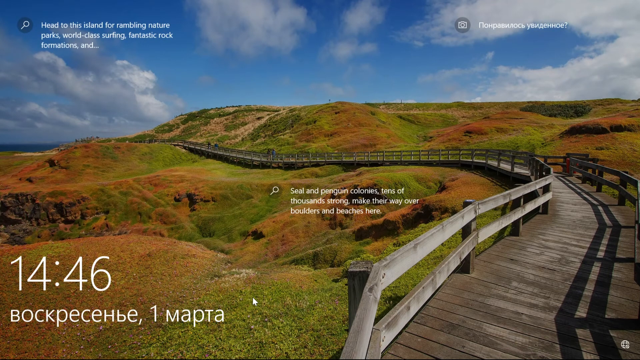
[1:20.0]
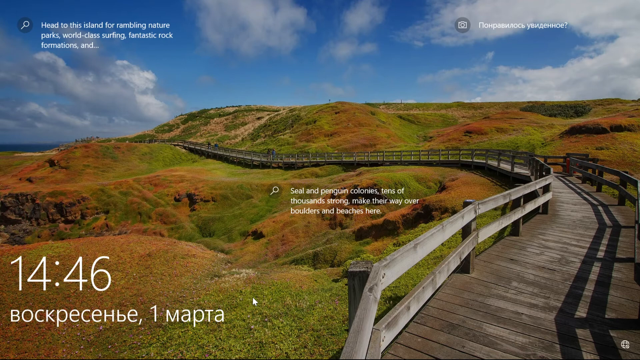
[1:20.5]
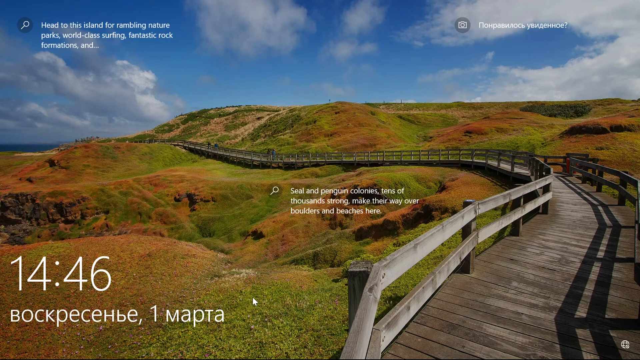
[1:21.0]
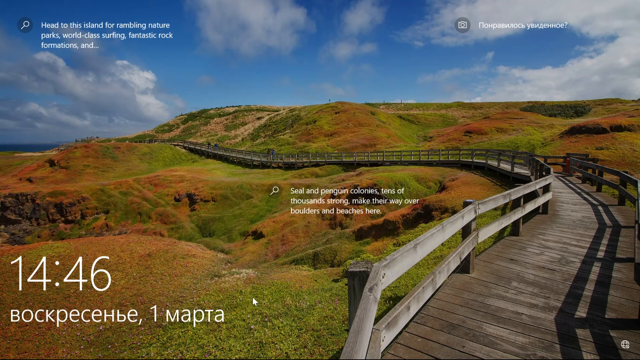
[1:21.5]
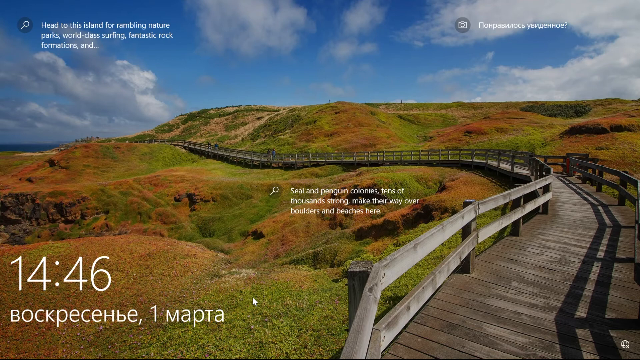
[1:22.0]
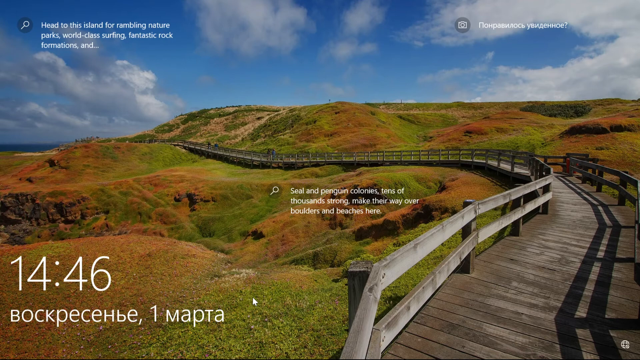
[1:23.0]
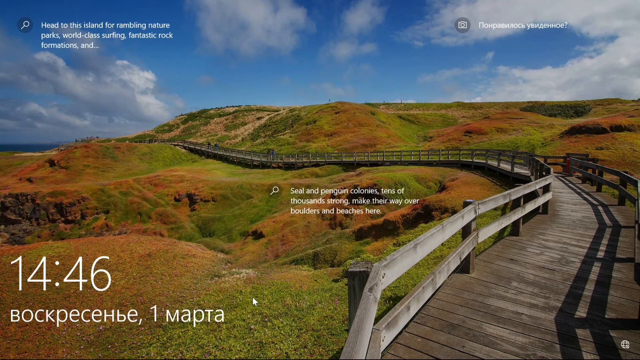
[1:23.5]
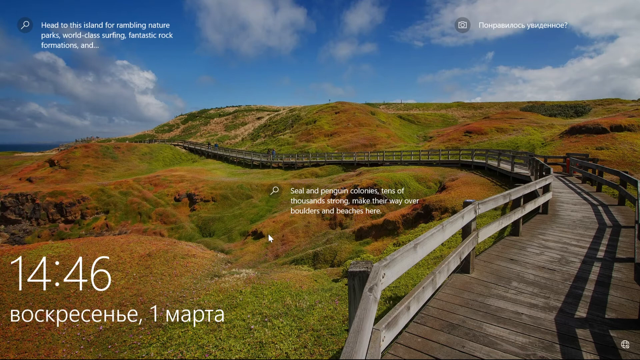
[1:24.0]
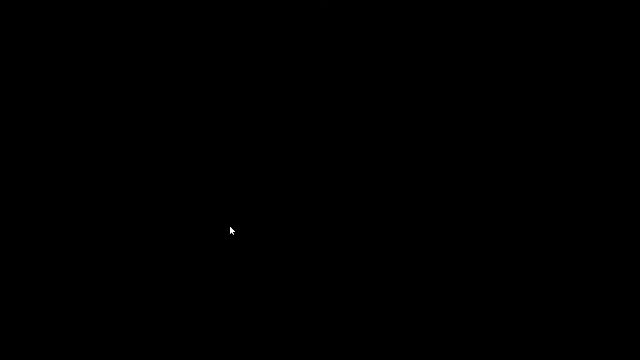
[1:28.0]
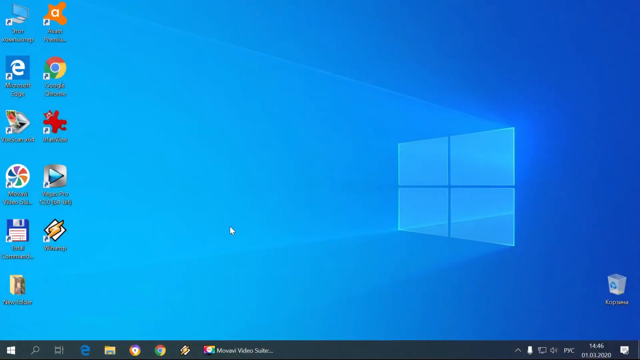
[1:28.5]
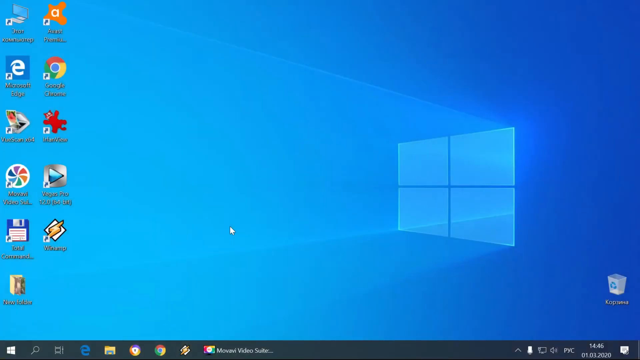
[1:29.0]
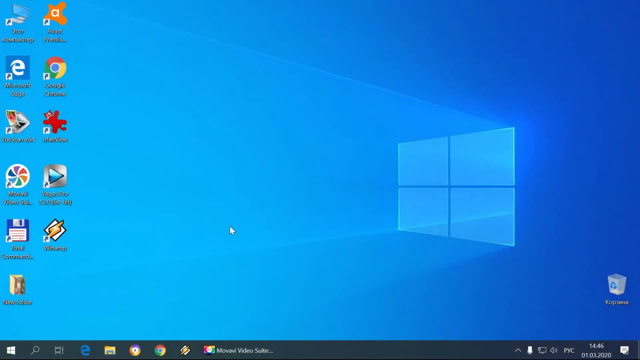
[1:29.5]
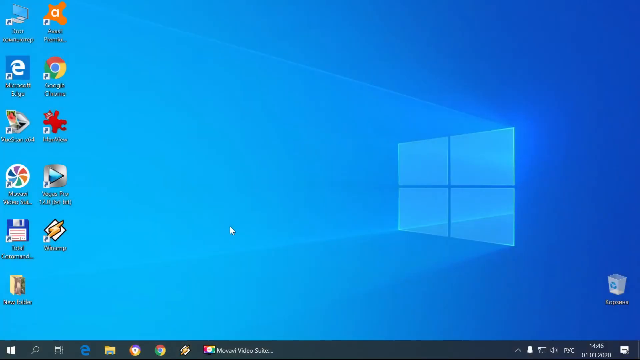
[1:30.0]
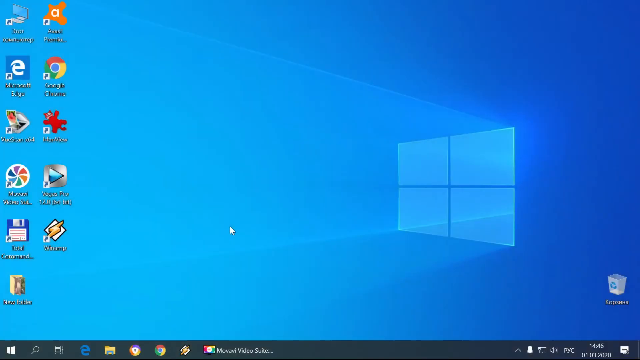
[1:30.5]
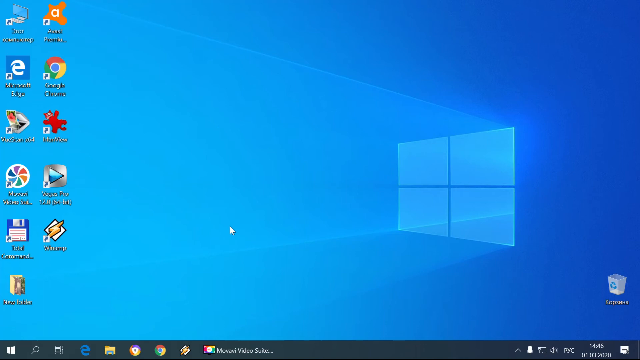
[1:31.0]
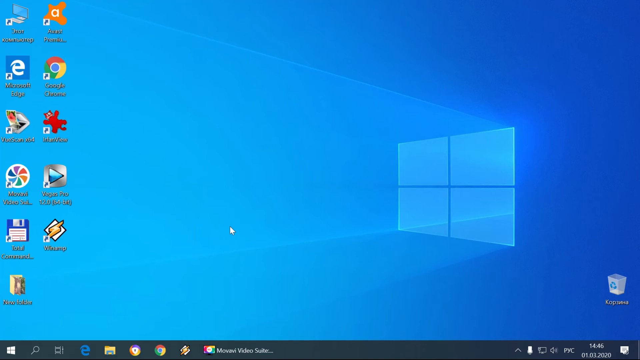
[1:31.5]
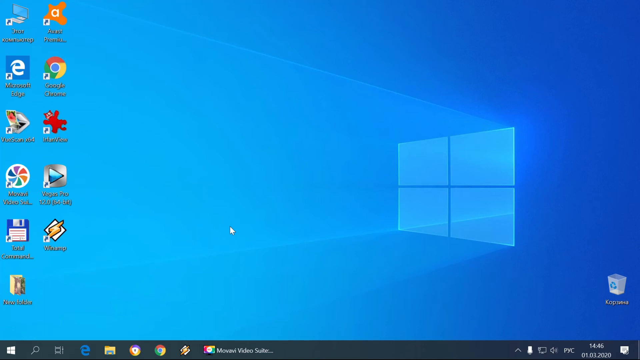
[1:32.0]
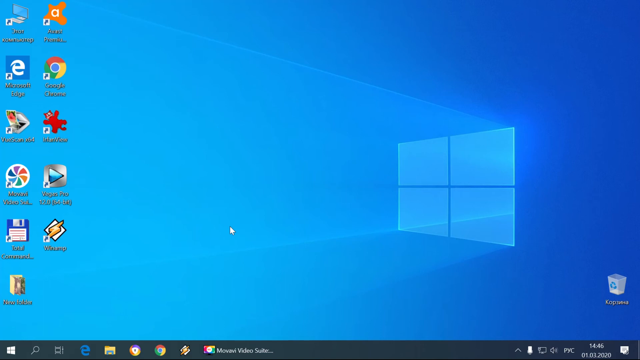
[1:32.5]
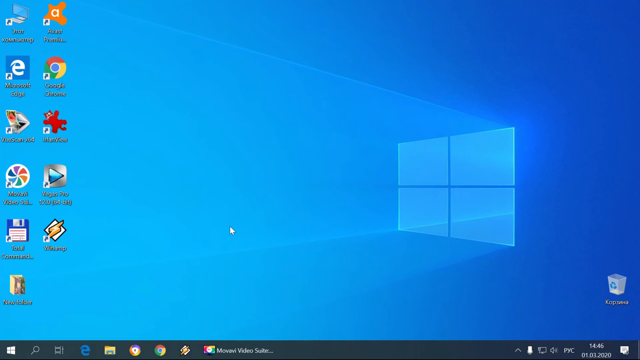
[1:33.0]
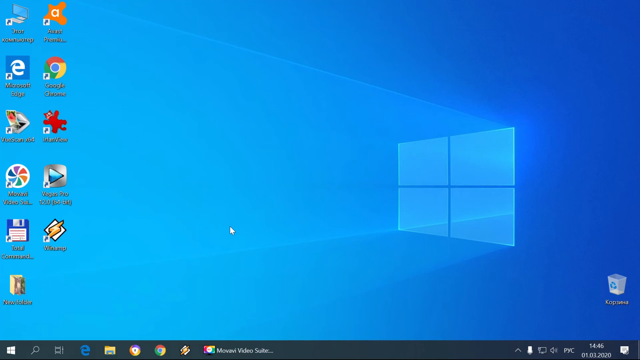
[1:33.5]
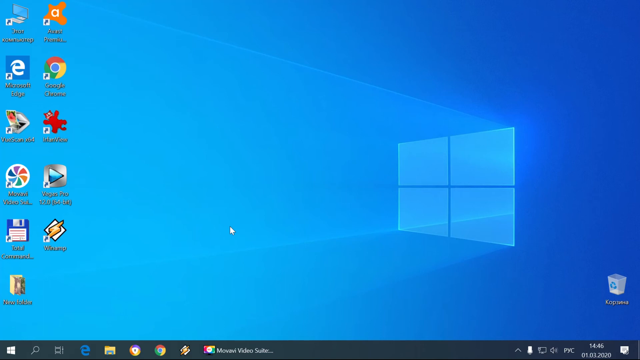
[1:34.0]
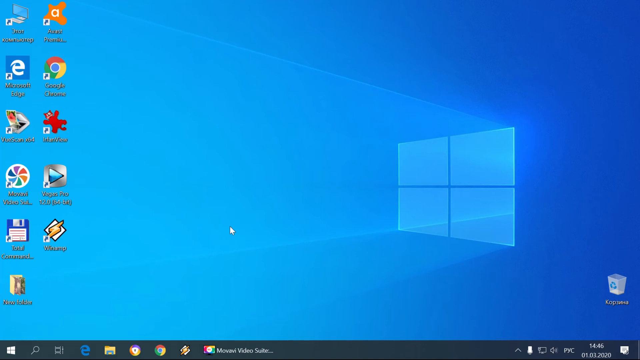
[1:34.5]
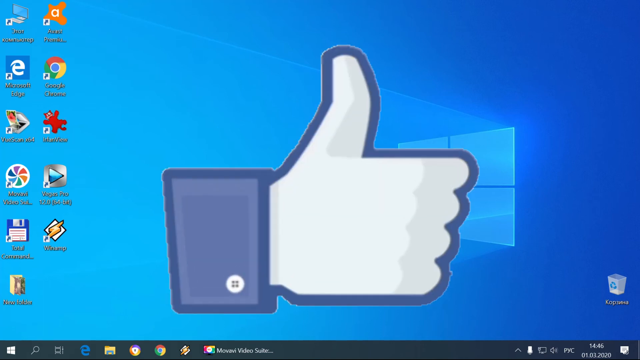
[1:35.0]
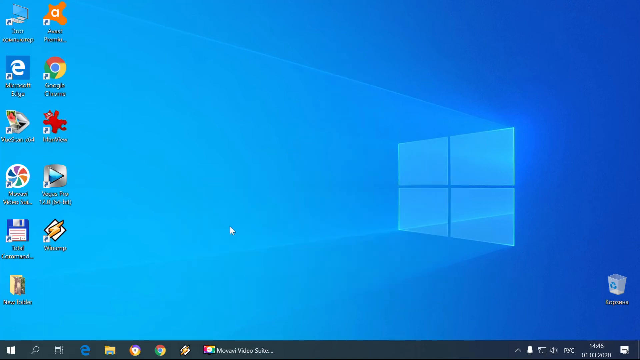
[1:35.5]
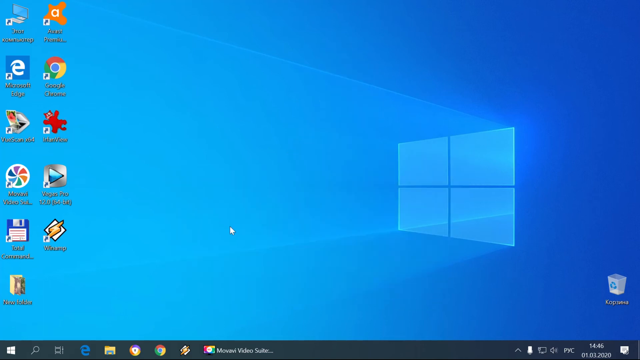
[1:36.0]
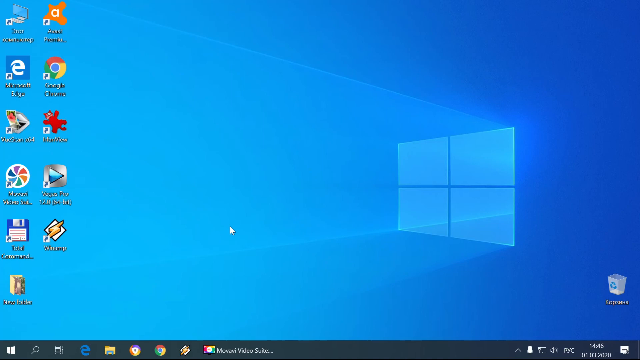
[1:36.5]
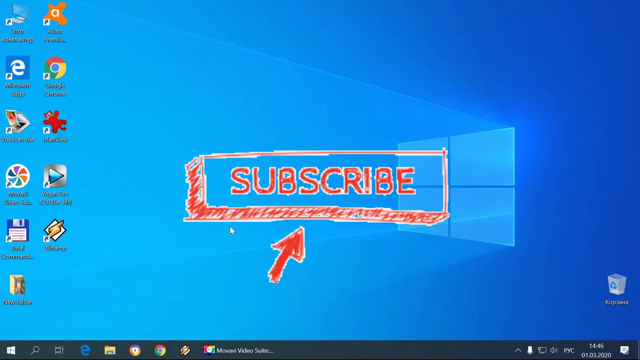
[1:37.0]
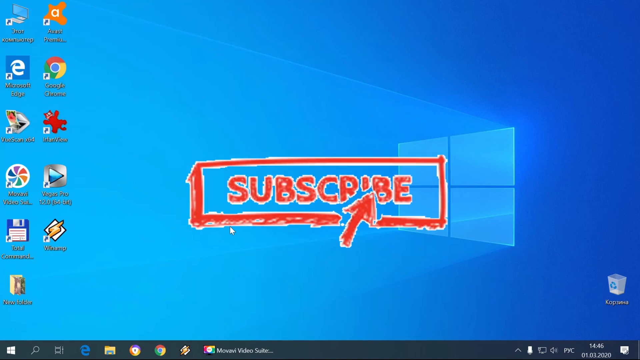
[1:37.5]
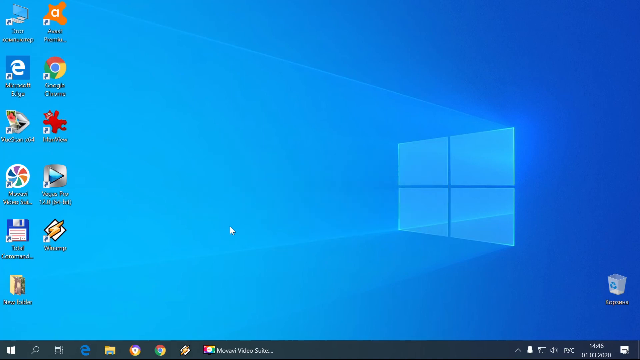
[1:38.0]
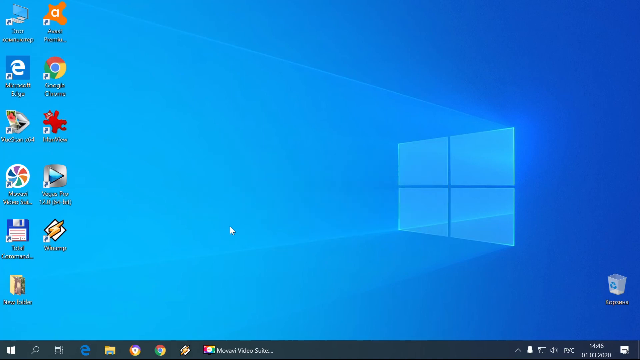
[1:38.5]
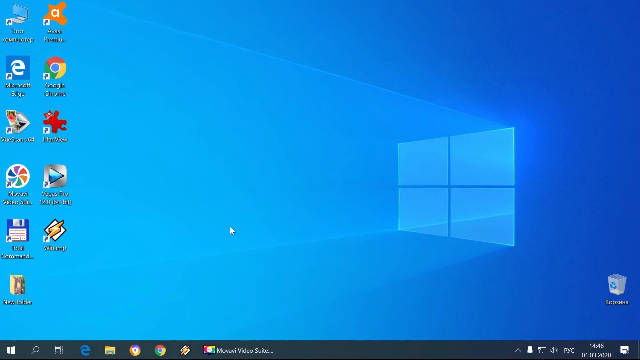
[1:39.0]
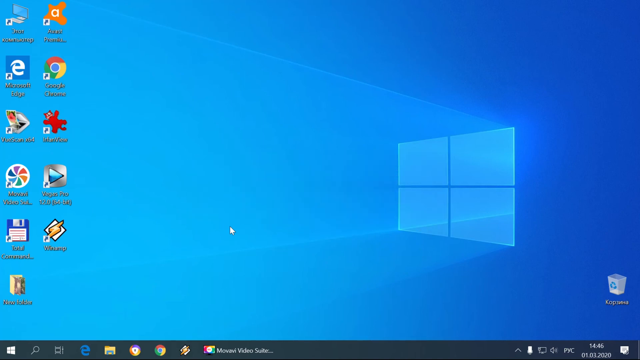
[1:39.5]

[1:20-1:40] A Windows lock screen shows small hills and valleys with a winding walkway or bridge that curves and dips across the formations, from the right side of the image to the left. It is a partly cloudy day with a blue sky; the formations appear moss-green, with some burnt orange colors as well. In the top left-hand corner is a search bar, and next to it the text "head to this island for rambling nature parks, world-class surfing, fantastic rock formations". Below that, in the center of the screen, is another search symbol, and to its right "seal and penguin colonies tens of thousands strong make their way over boulders and beaches here". Below, in the left corner, is the time 14:46 and a country name in German. The user circles the mouse around the center of the screen, and it opens to the home screen background with the apps, logged in. A small window is just off the right of the screen, and the cursor moves around a bit. A large thumbs-up pop-up that looks like a Facebook one appears, followed by a banner bordered in red that flashes across and says "subscribe".